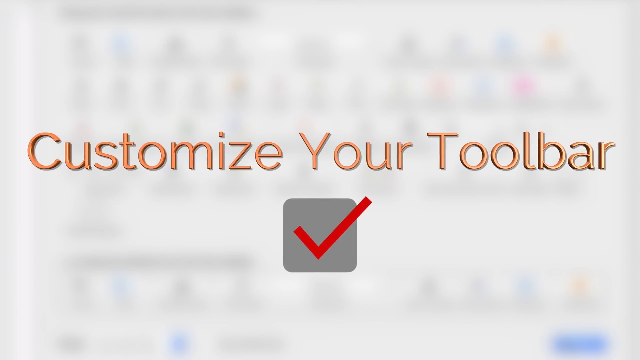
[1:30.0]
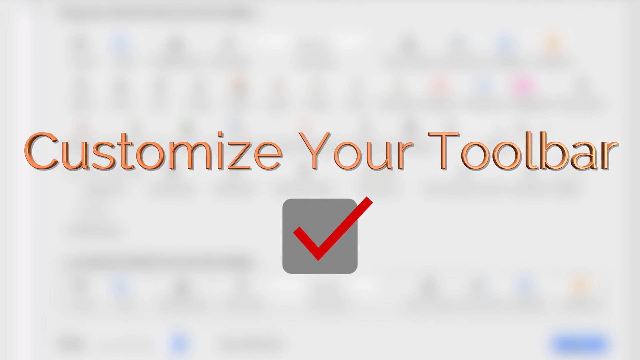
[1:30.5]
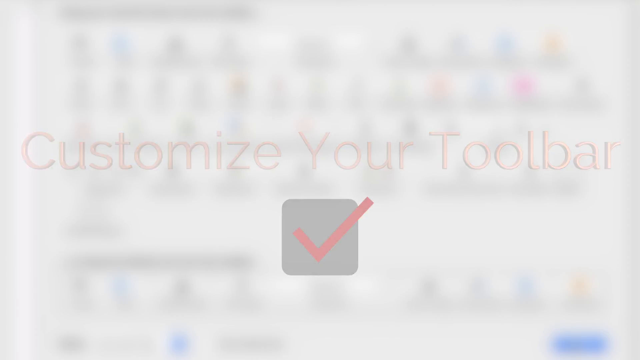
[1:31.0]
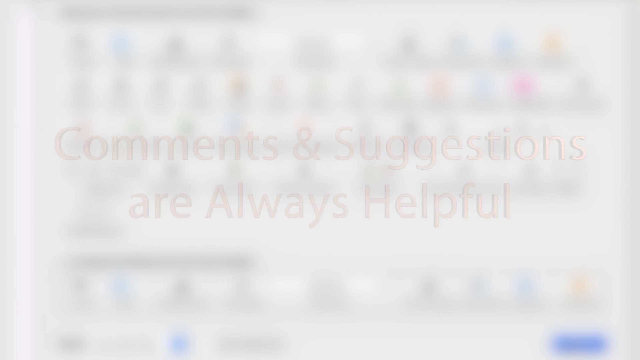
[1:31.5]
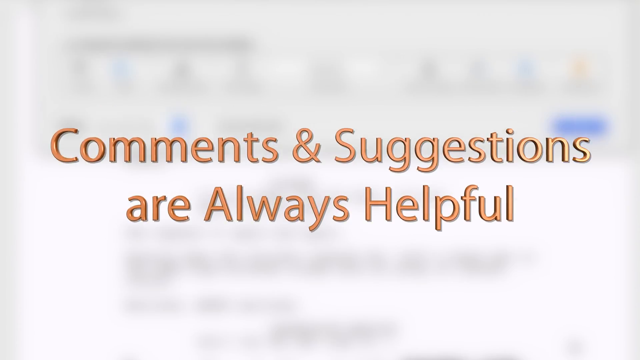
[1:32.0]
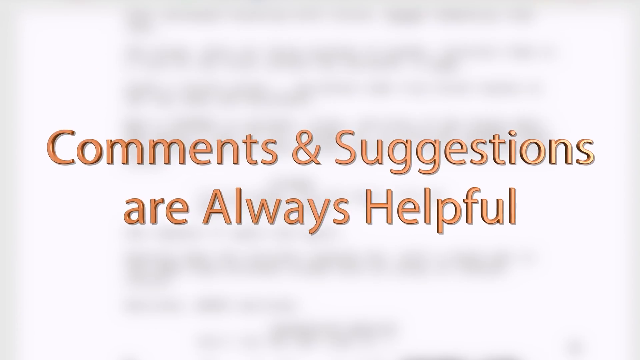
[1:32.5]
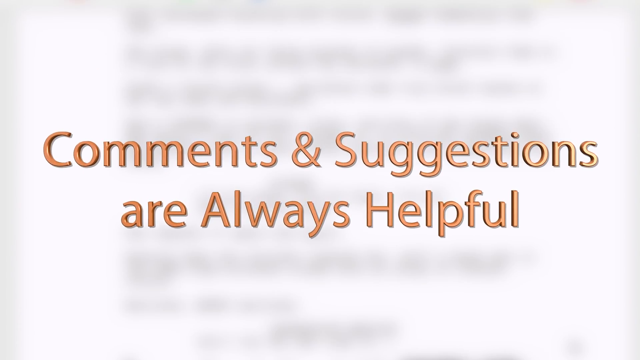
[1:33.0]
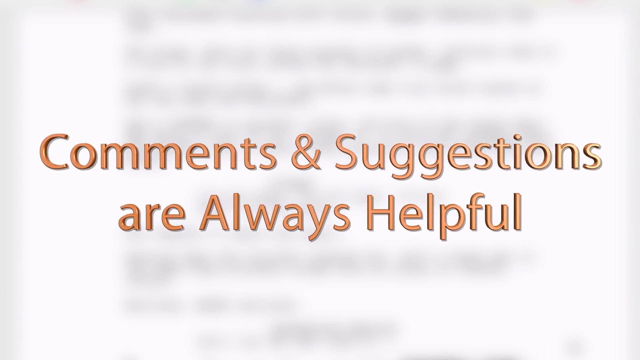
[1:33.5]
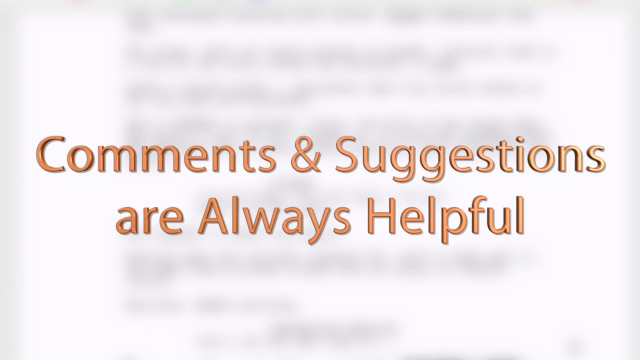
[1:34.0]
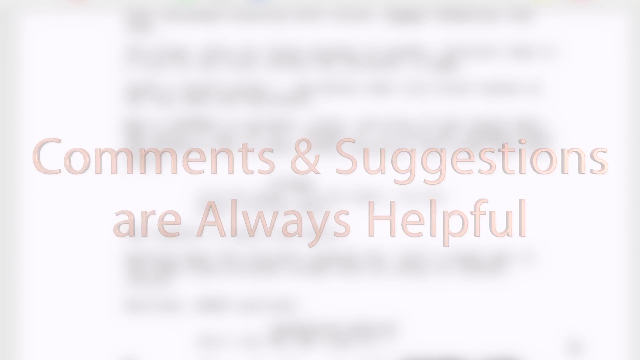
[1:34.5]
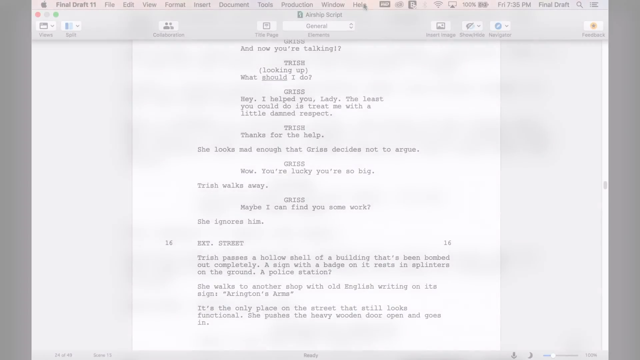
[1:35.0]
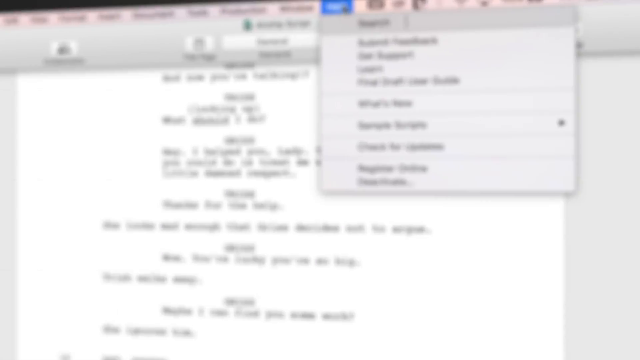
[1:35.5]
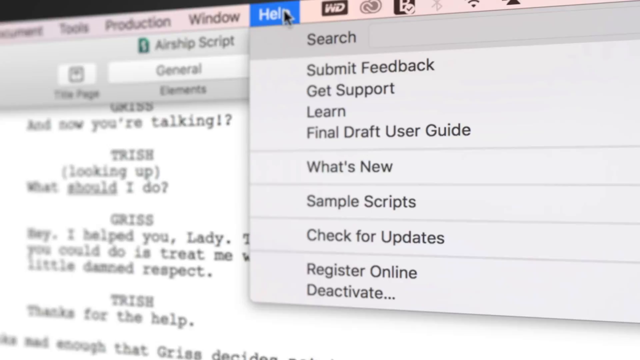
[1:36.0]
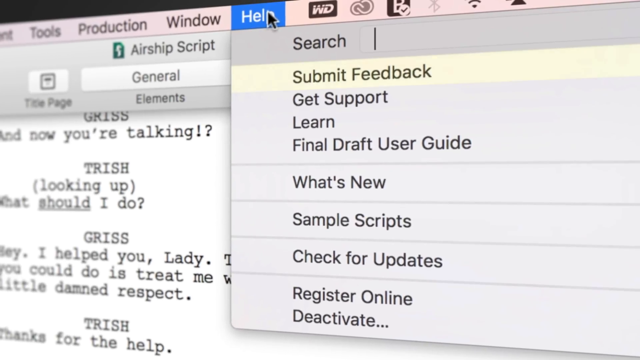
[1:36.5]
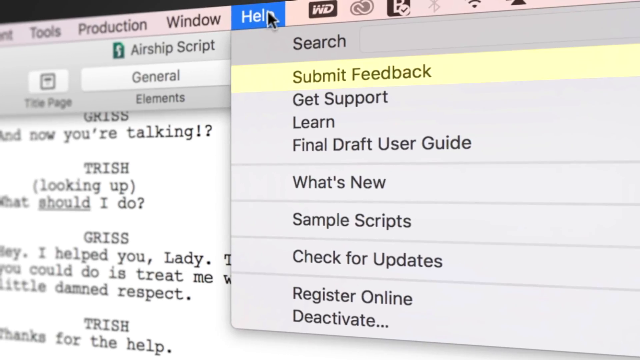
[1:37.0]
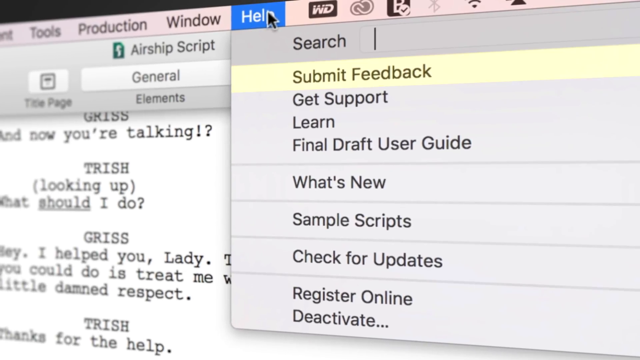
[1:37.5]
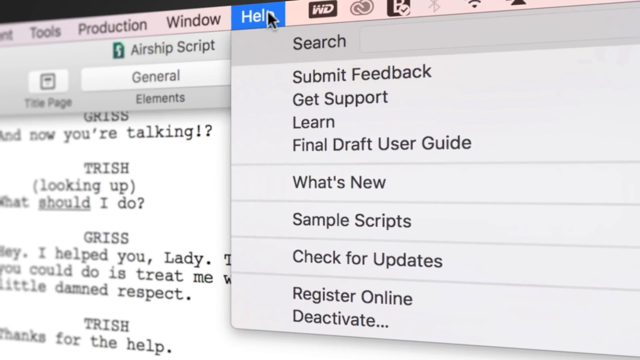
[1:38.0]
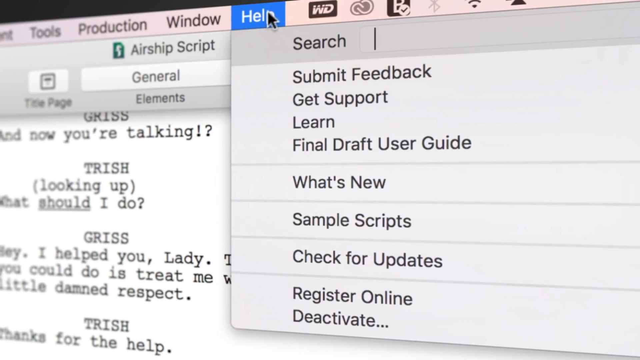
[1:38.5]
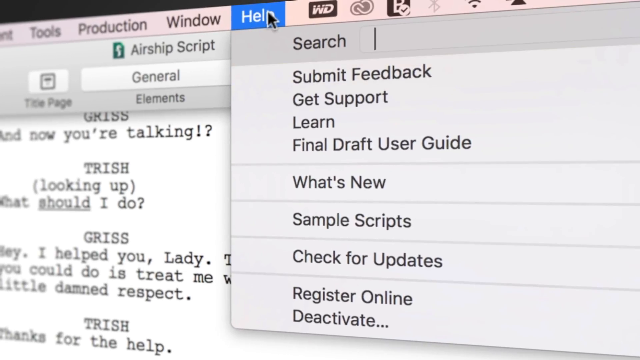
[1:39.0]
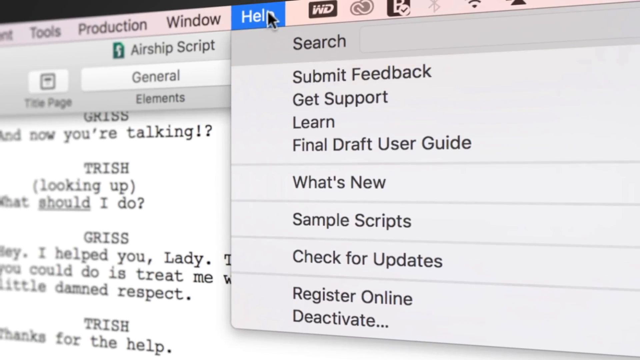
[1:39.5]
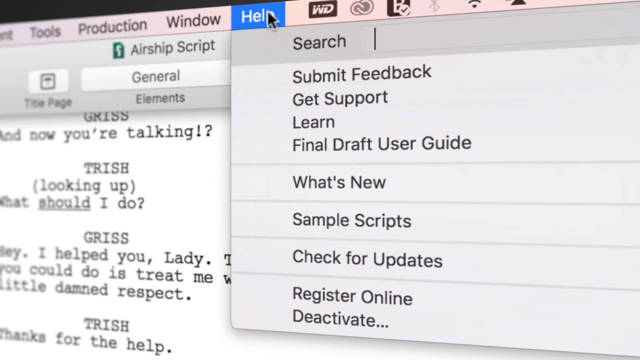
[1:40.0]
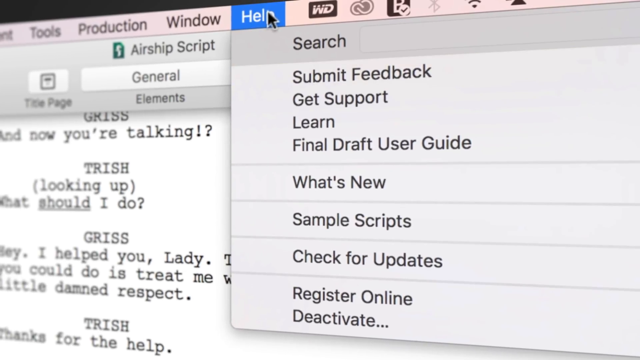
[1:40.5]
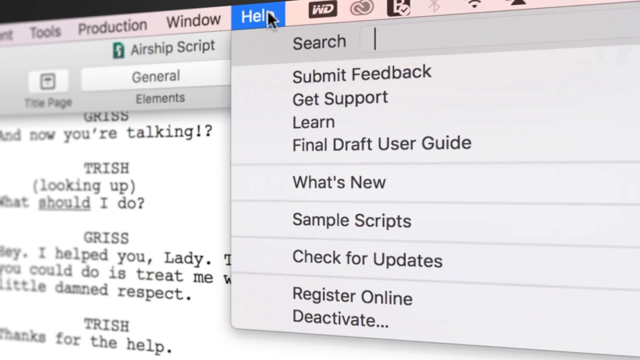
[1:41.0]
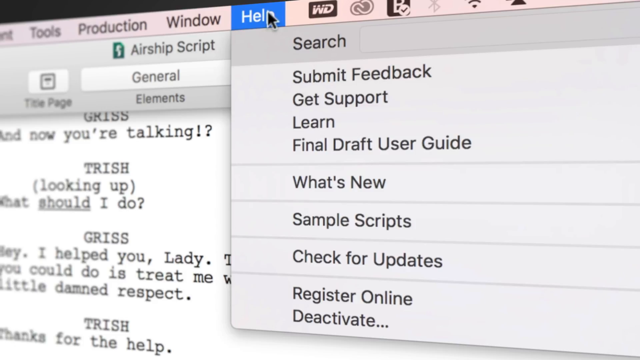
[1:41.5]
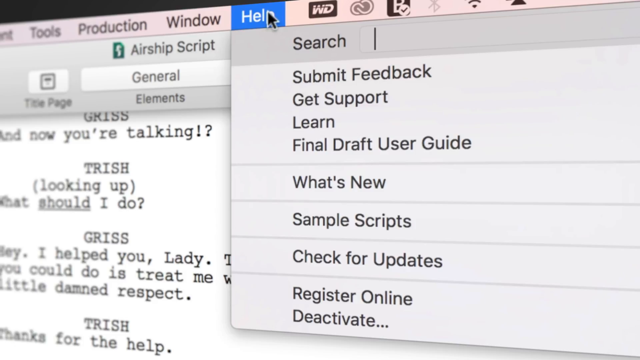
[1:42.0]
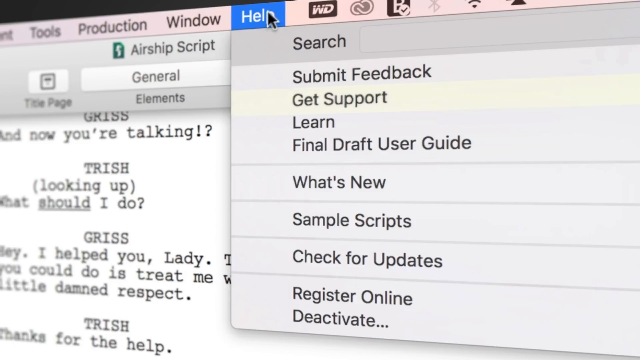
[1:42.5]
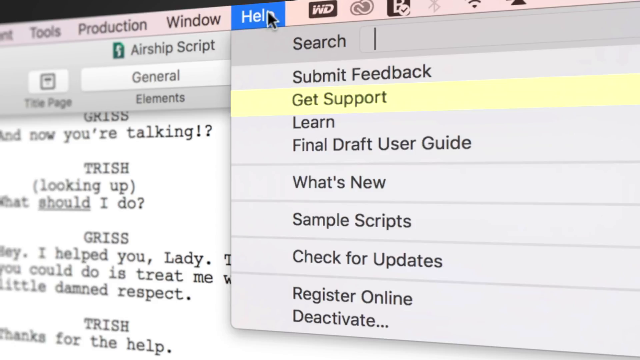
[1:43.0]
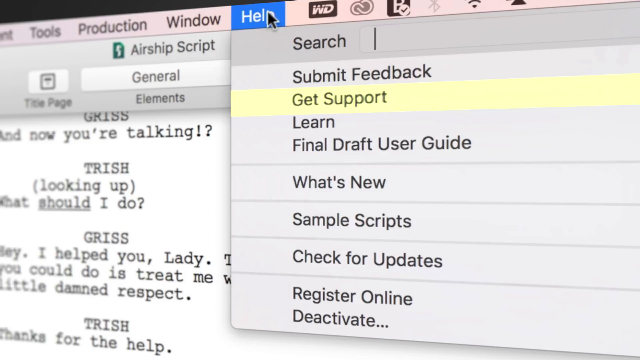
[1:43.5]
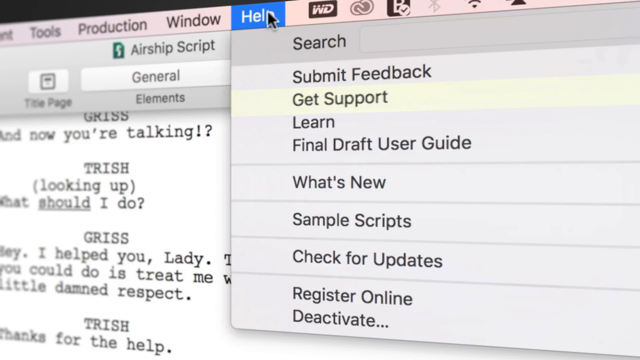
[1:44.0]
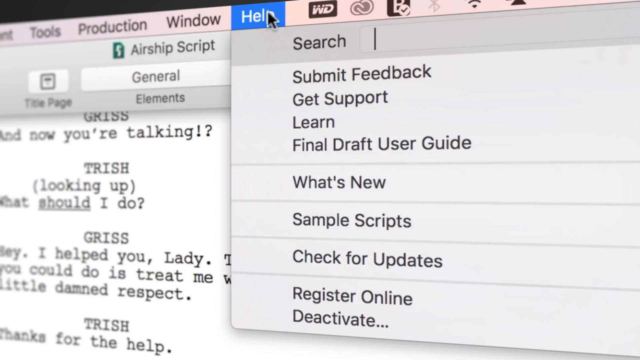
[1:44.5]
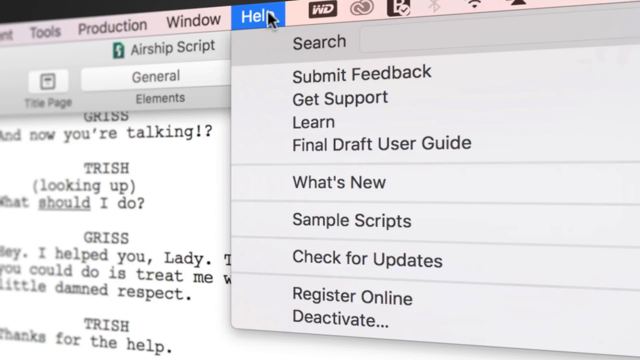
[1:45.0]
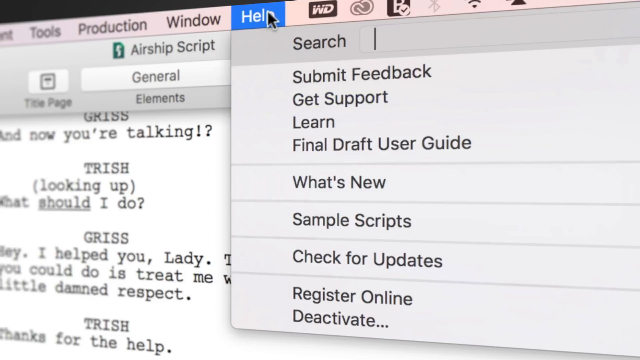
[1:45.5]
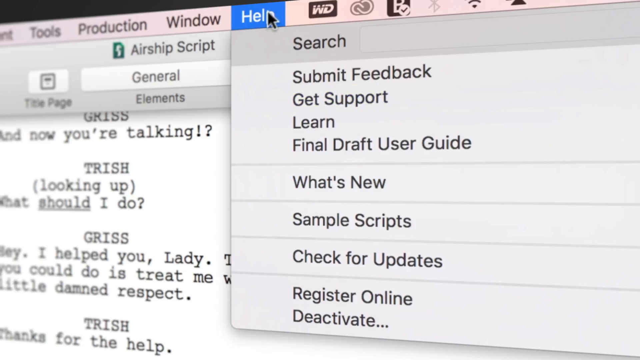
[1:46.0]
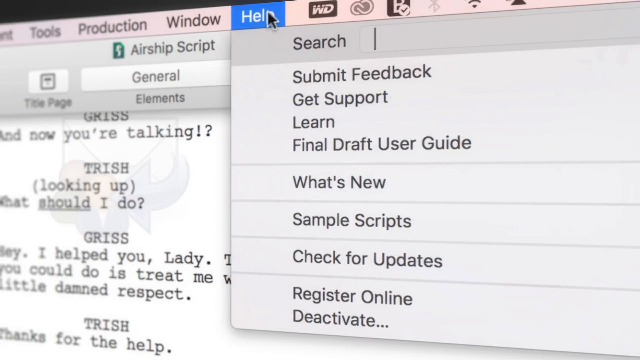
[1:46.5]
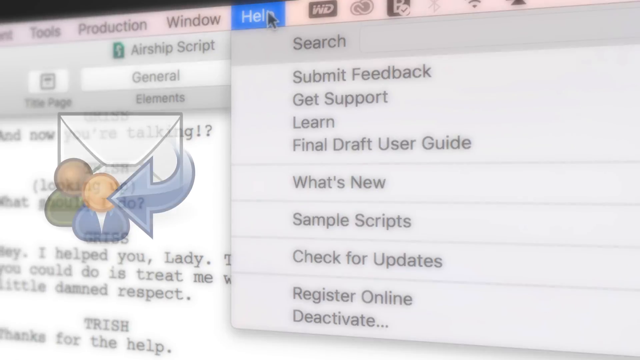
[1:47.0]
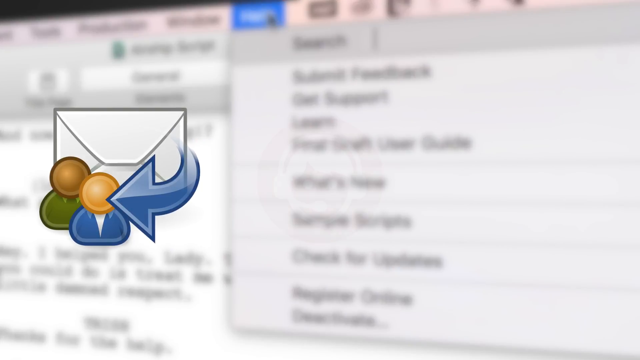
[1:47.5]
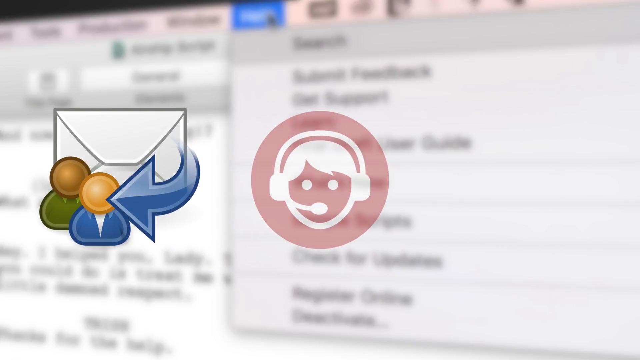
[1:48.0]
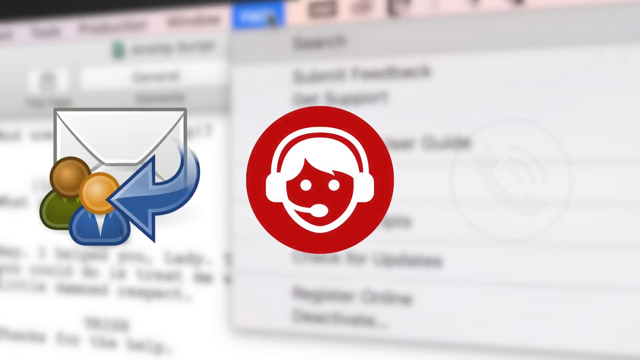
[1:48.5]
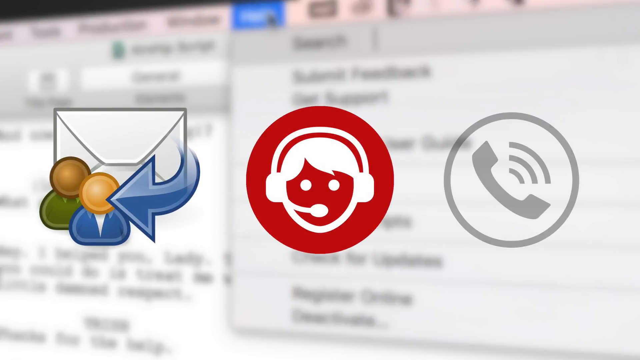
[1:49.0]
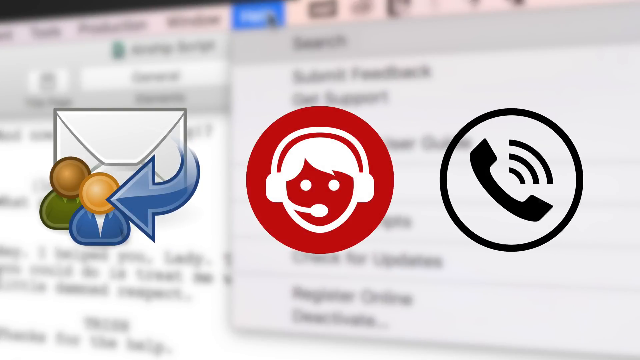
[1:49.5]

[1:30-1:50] A computer graphic shows stylized text reading "customize your toolbar" with a gray box underneath containing red check marks; all of it comes toward the camera, kind of zooming toward it, and then fades away. Other text fades in reading "comments and suggestions are always helpful," with a blurred text document in the background, and it zooms in. The view transitions to the Final Draft application on a computer screen. The screen becomes a little blurry and zooms in on the help menu at the top of the application, with the mouse cursor on it and its drop-down items shown: search, submit feedback, get support, learn final draft, user guide, what's new, sample scripts, check for updates, register online and deactivate. A search bar appears with a cursor inside it, and the camera zooms in on it. All of this is shown at a strange angle, like 45 degrees. "Get support" becomes highlighted in the list while the cursor keeps blinking in the search bar. A mail icon then appears on the left side of the screen, some kind of communication icon in the center, and a phone icon on the right.